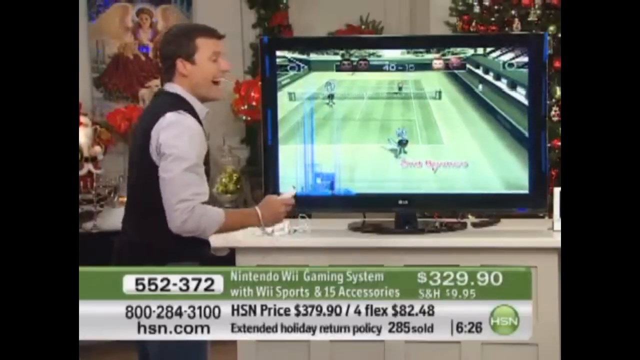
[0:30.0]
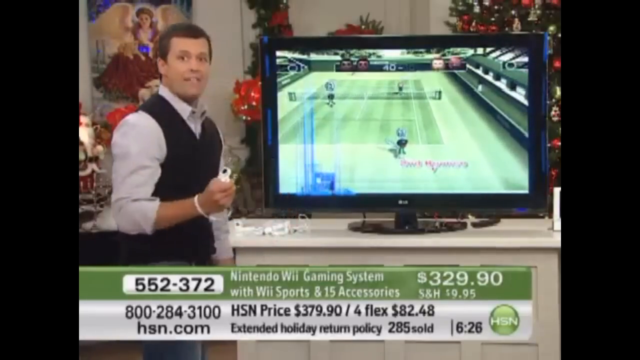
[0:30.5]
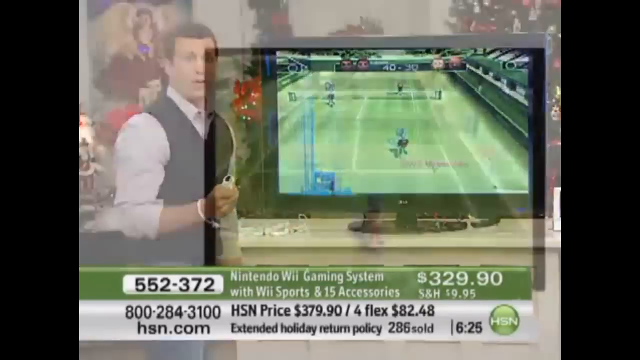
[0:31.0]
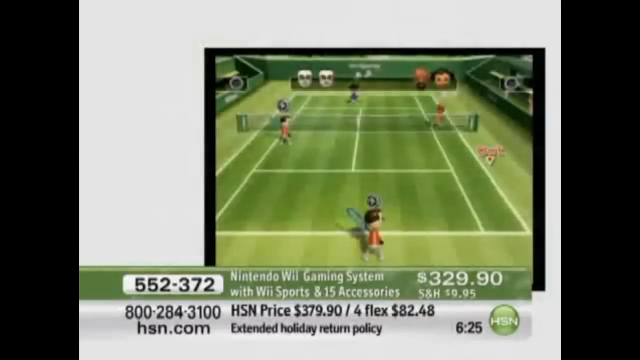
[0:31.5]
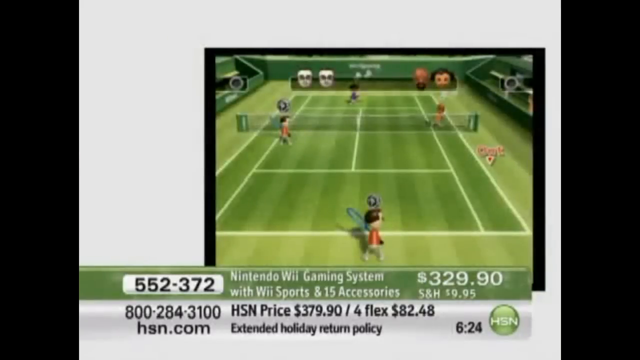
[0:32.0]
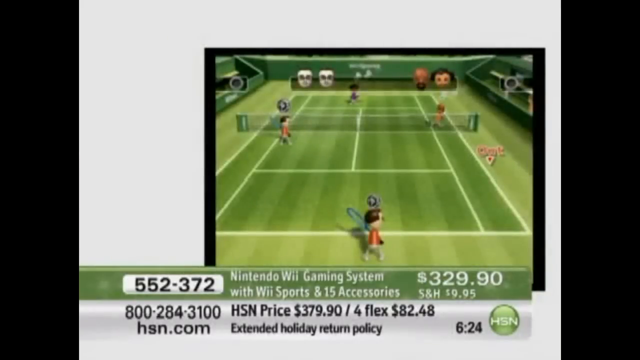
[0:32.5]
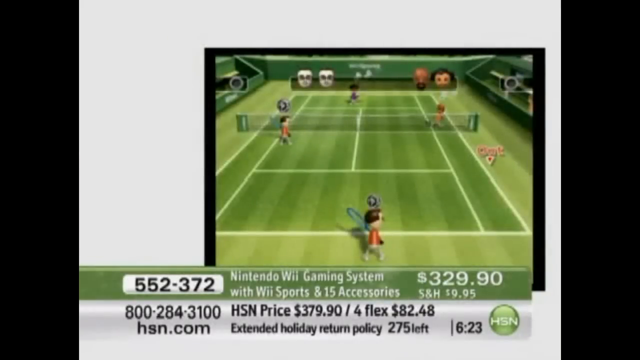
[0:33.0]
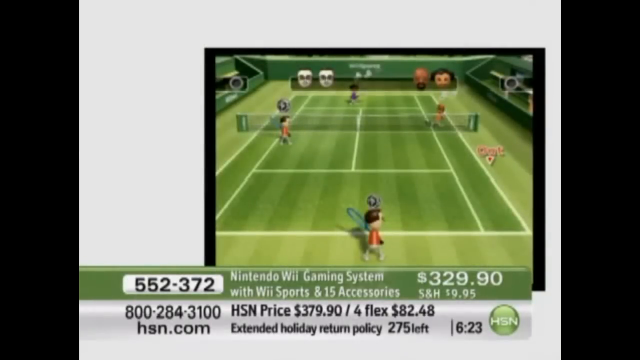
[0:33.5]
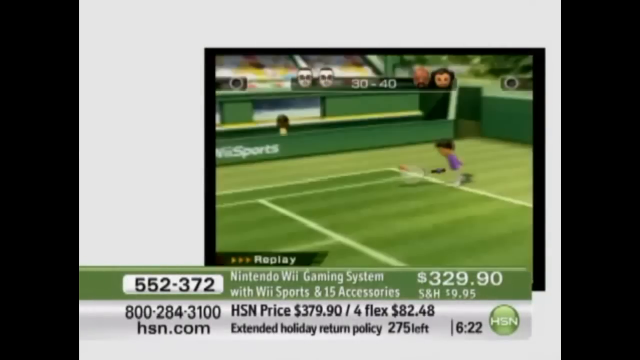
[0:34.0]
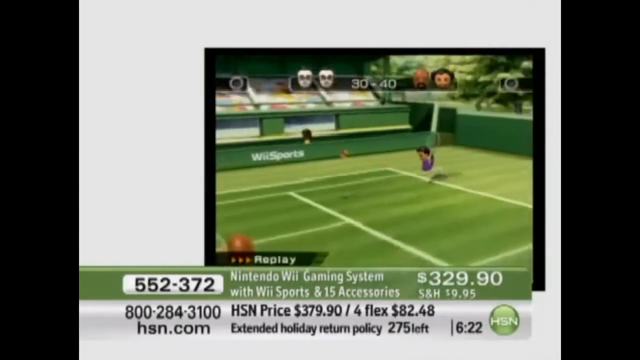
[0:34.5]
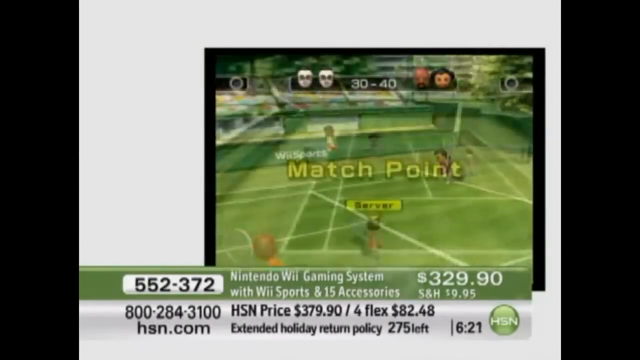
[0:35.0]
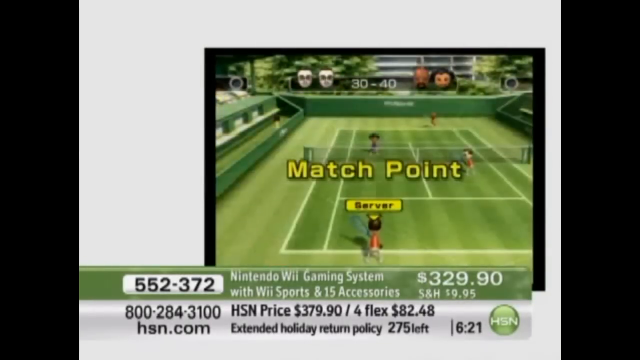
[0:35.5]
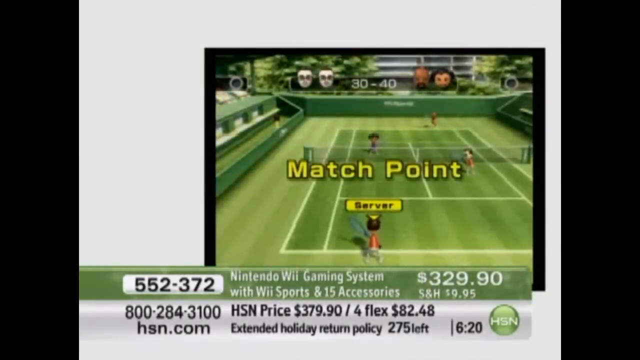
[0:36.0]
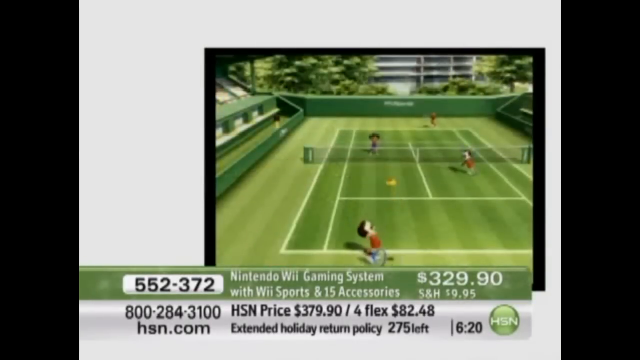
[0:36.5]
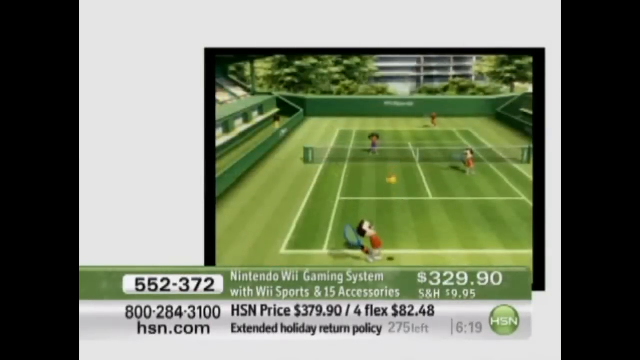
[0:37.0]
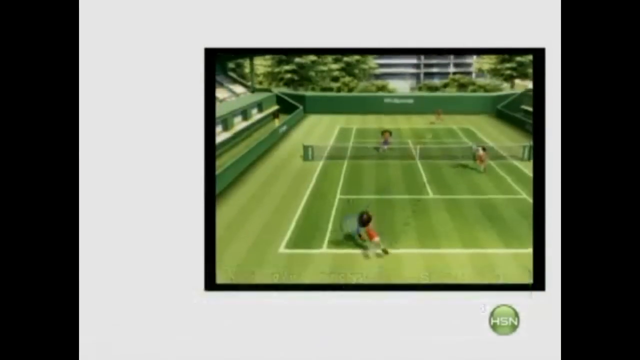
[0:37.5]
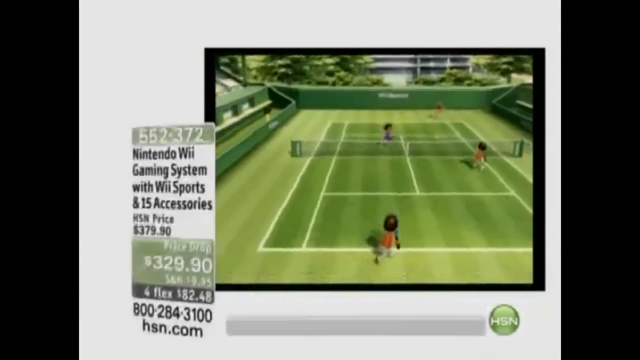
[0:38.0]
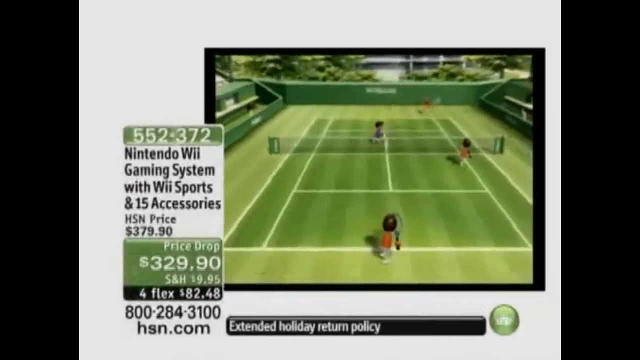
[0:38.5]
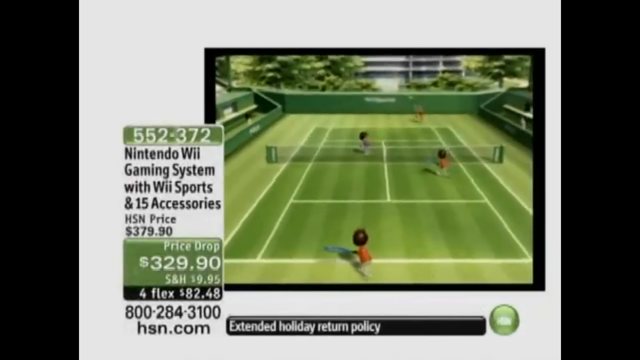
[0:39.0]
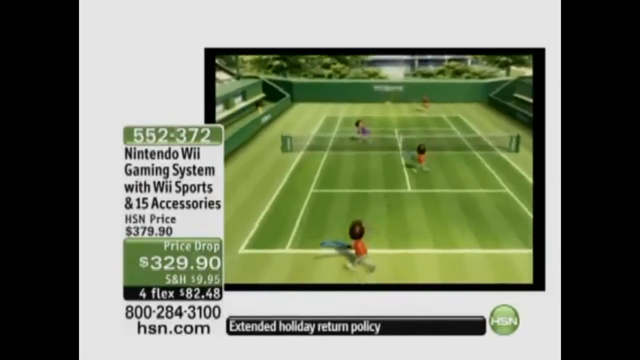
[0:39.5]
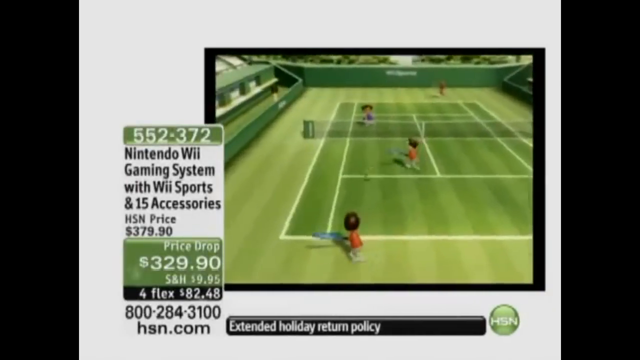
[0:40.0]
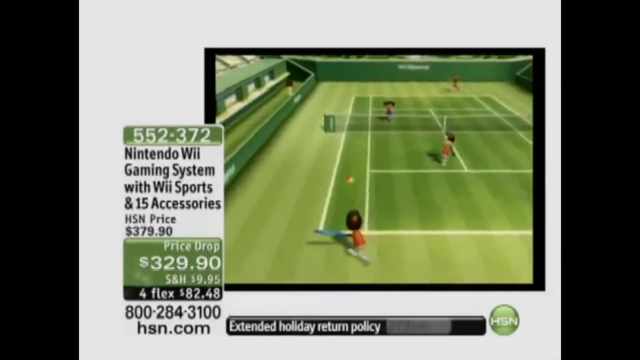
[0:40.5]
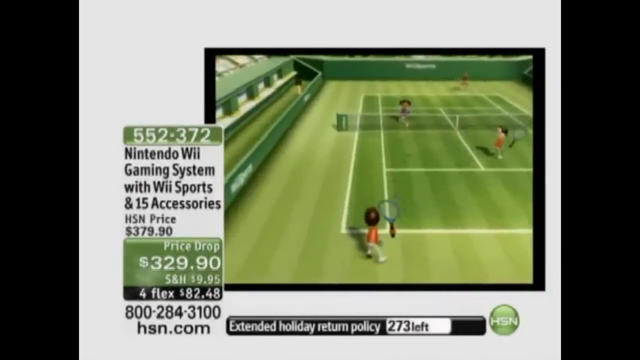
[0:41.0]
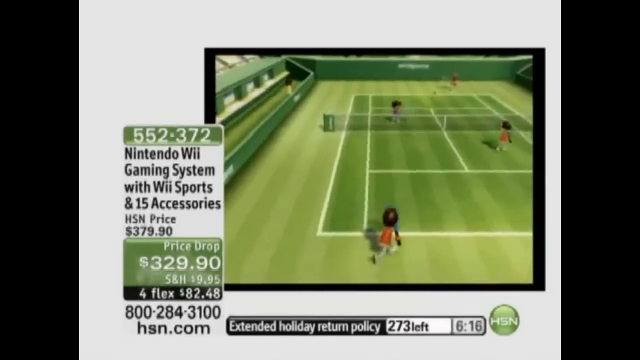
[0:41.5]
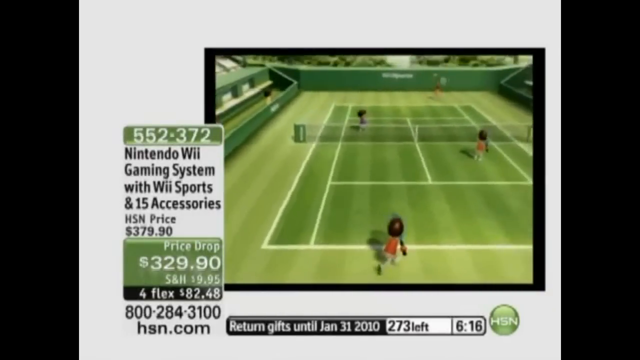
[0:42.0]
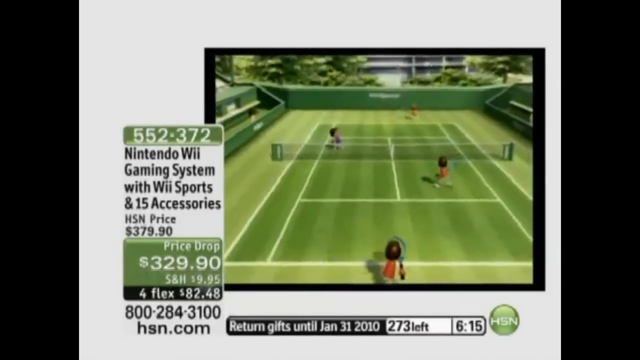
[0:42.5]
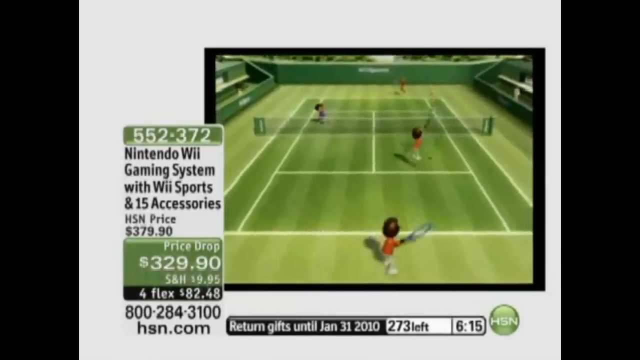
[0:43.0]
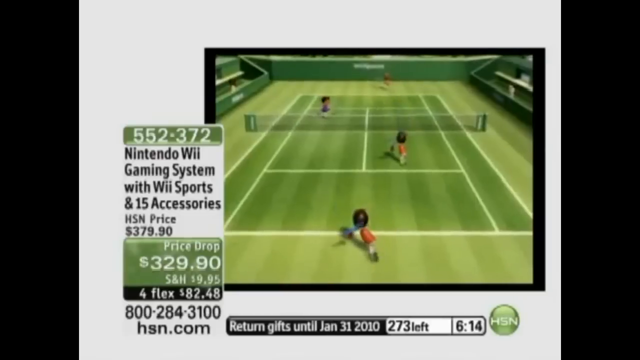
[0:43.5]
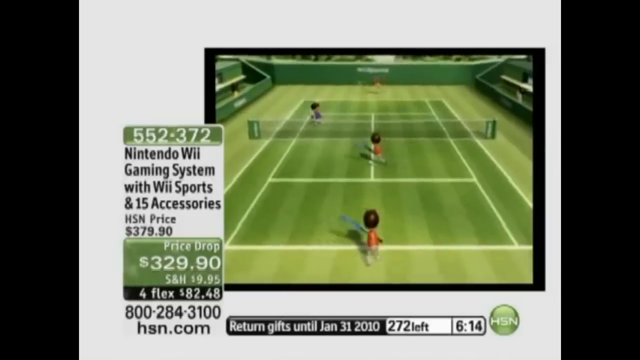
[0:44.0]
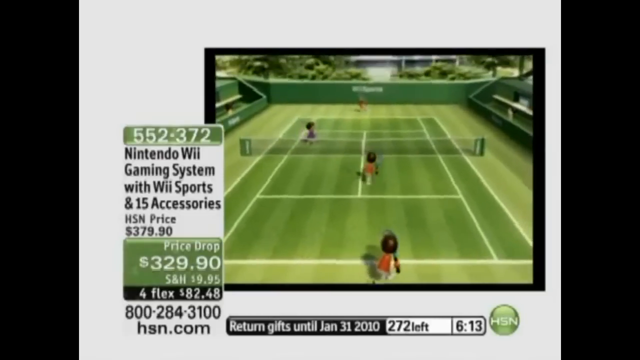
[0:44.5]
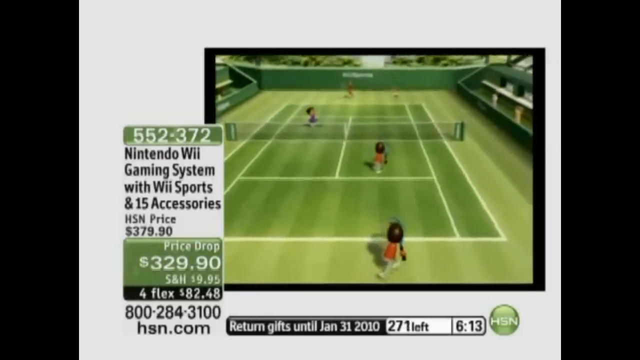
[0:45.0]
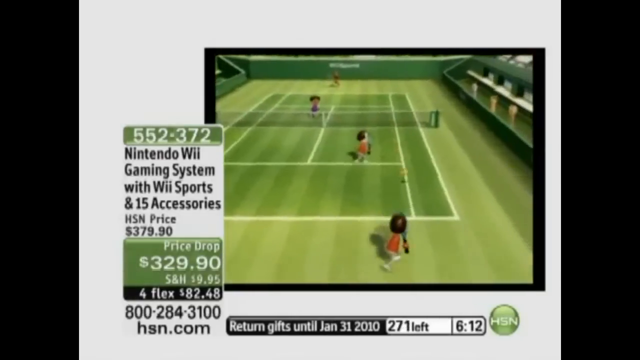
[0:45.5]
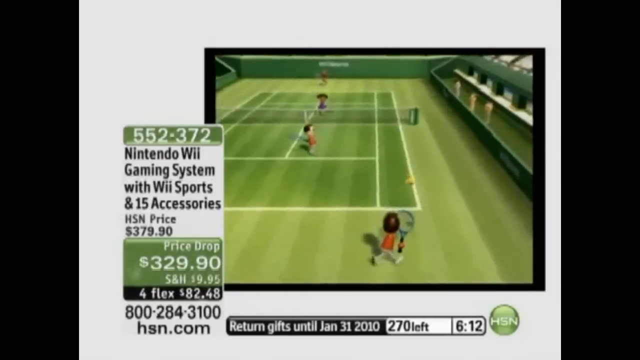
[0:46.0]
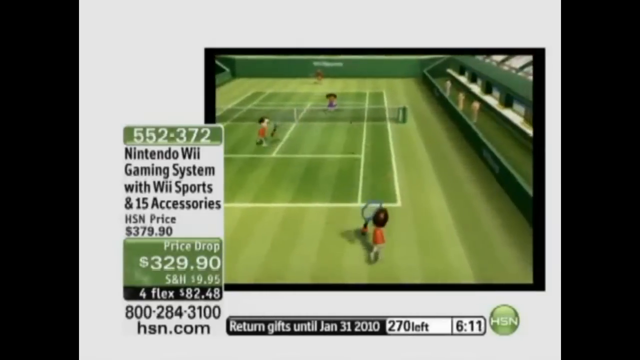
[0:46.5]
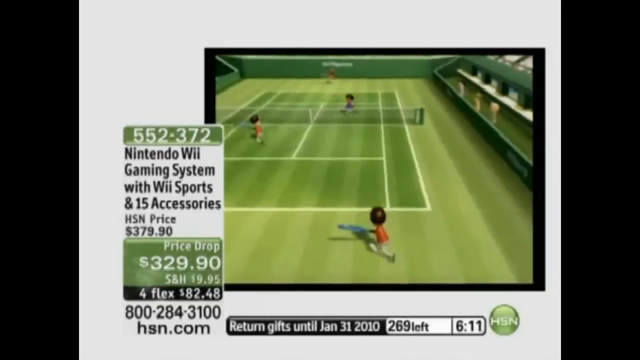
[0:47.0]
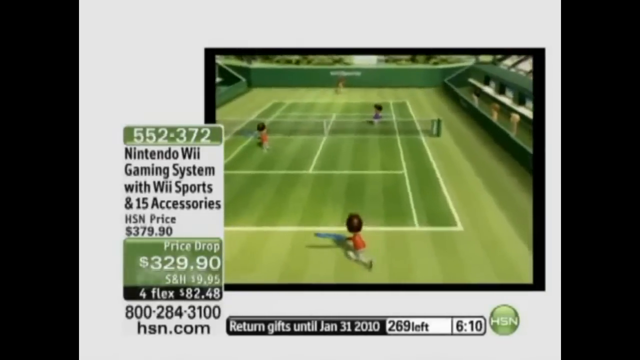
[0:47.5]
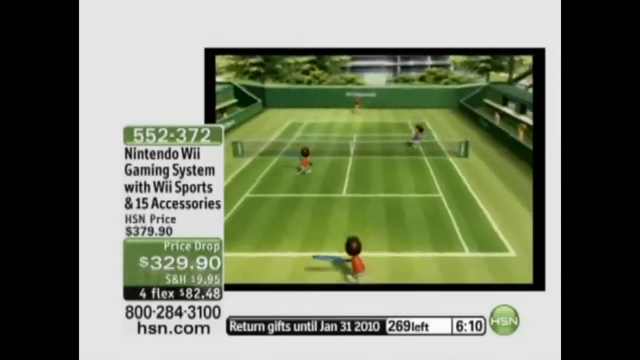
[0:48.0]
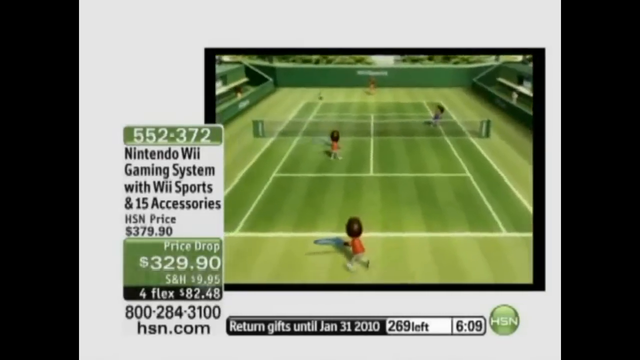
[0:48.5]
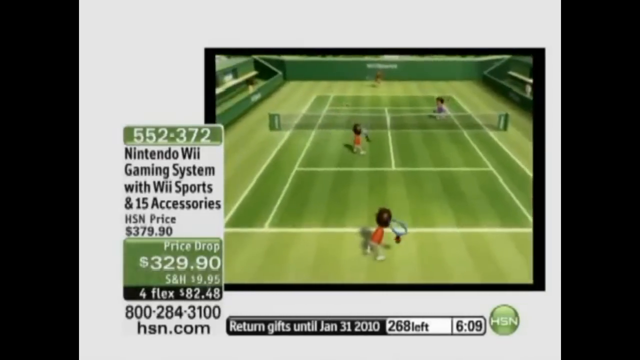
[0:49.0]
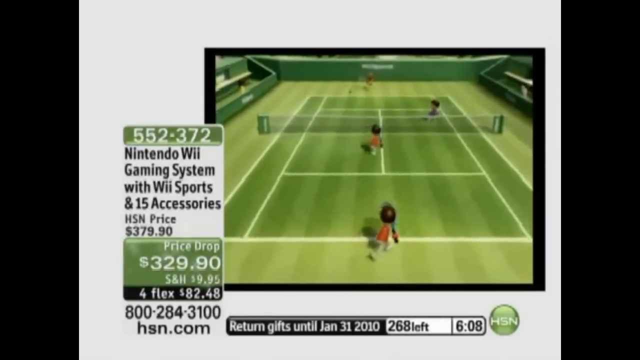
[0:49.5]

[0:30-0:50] The Home Shopping Network presentation continues with a Nintendo Wii Gaming System with Wii Sports and 15 Accessories for sale, its price listed as $329.90. A close-up of the gaming interface shows a simulated tennis match played with four Wii avatars. As it plays out, a small box with the description and price of the gaming system appears on the left of the screen. The scene then switches back to the studio, where a male and a female presenter are on a set in front of a large screen TV displaying the Wii interface with a simulated tennis match. The set behind them is decorated for Christmas with garlands, lights, a Christmas tree, and pictures of Santa Claus and an angel on the wall.